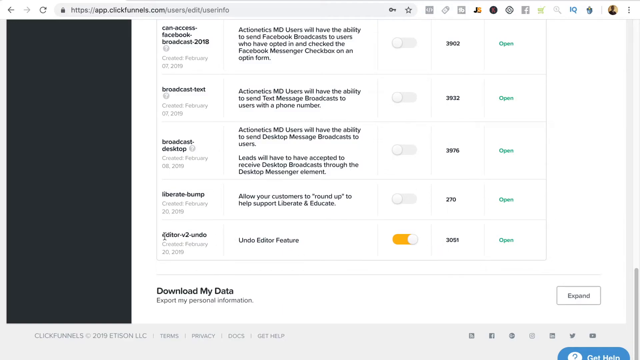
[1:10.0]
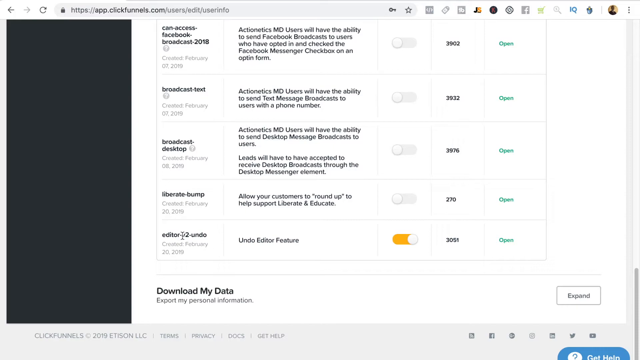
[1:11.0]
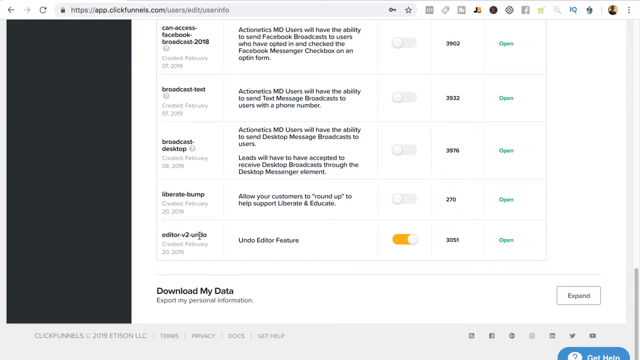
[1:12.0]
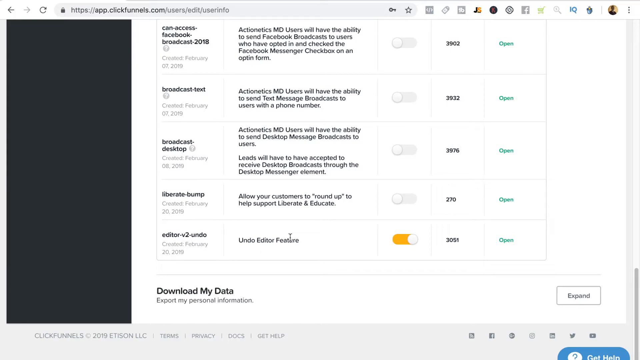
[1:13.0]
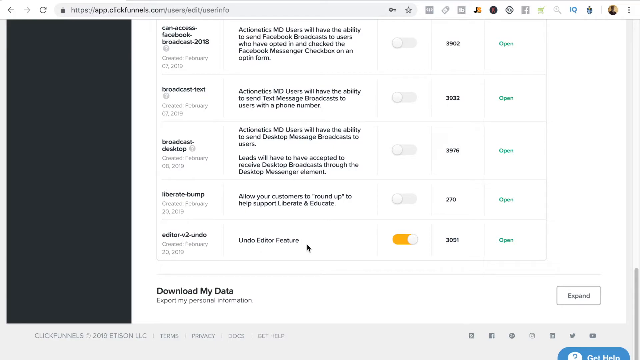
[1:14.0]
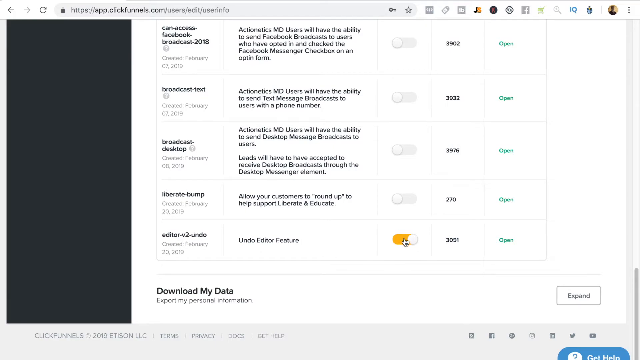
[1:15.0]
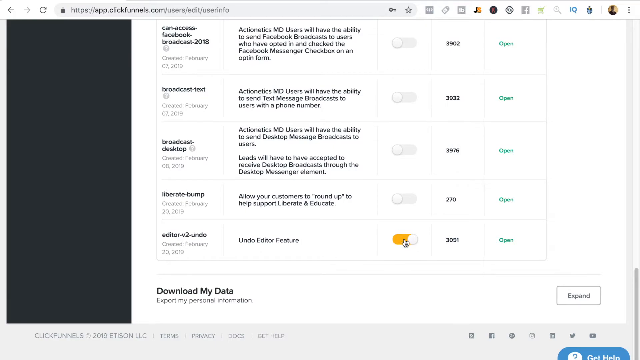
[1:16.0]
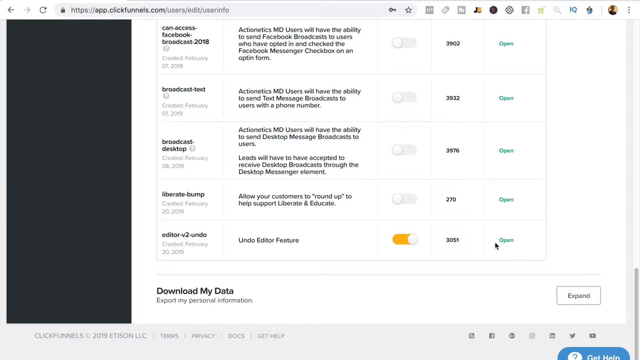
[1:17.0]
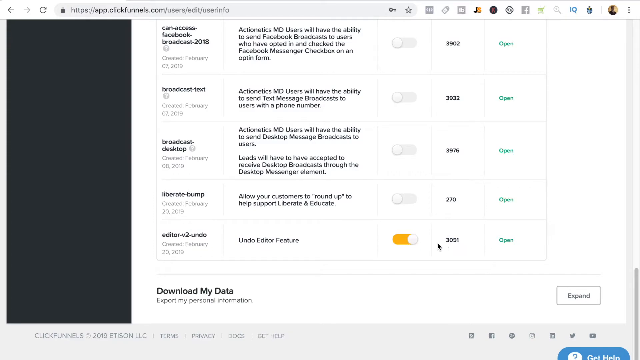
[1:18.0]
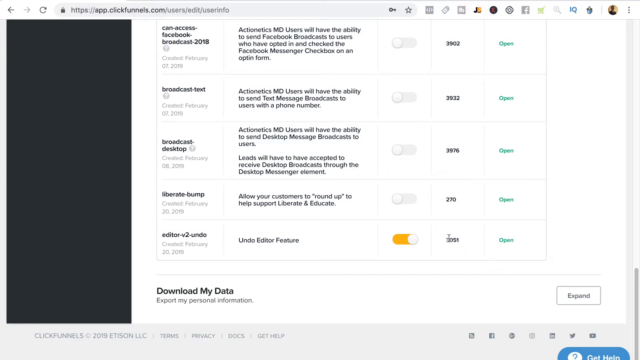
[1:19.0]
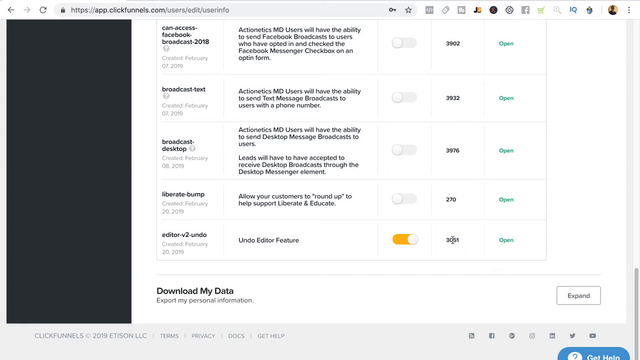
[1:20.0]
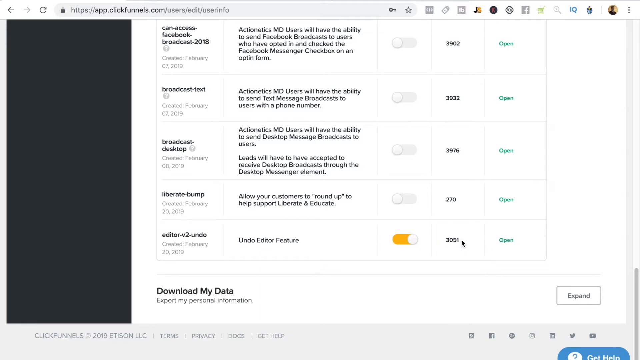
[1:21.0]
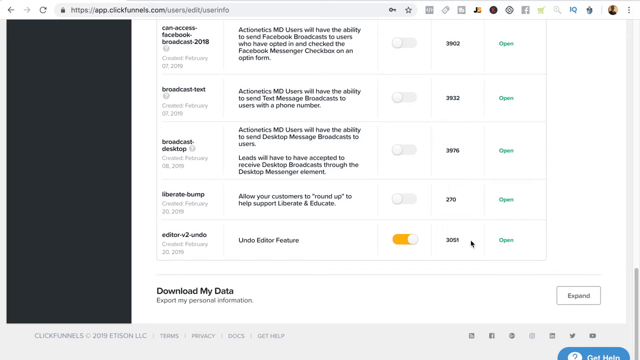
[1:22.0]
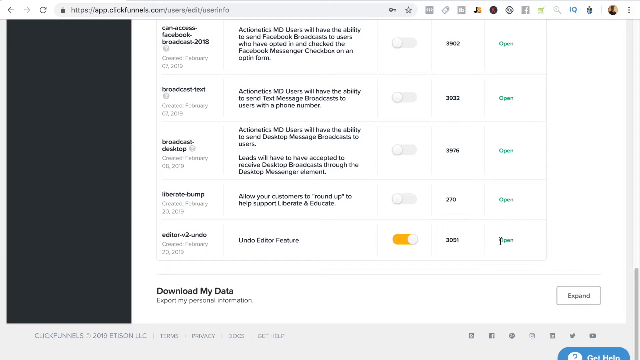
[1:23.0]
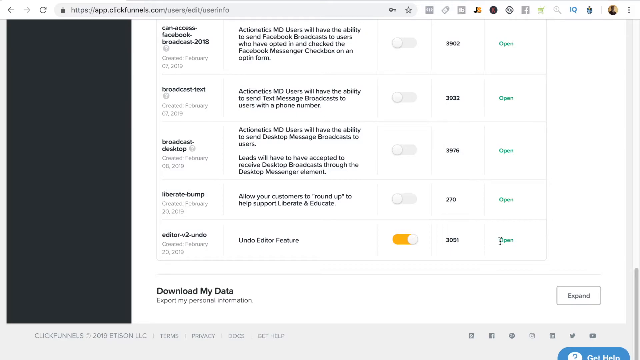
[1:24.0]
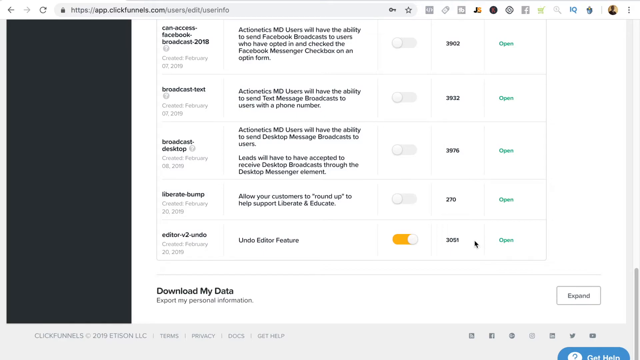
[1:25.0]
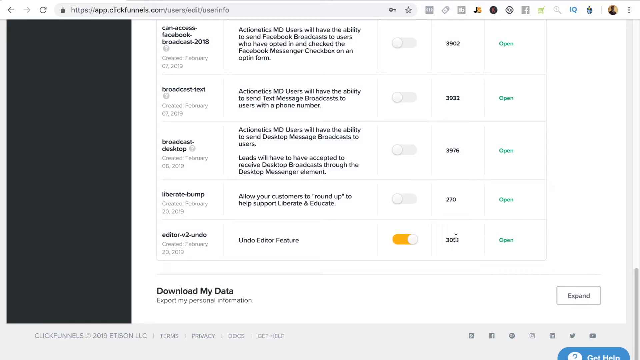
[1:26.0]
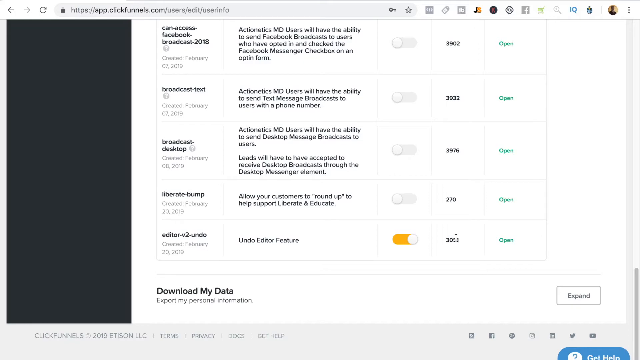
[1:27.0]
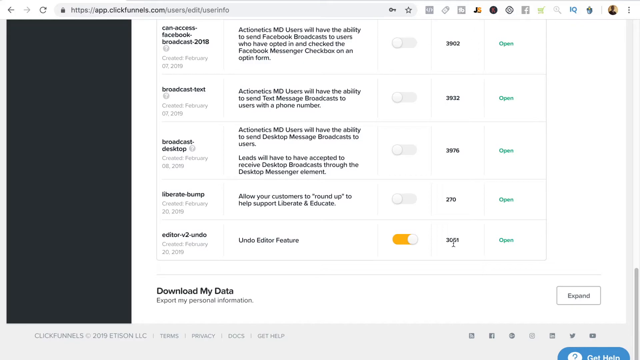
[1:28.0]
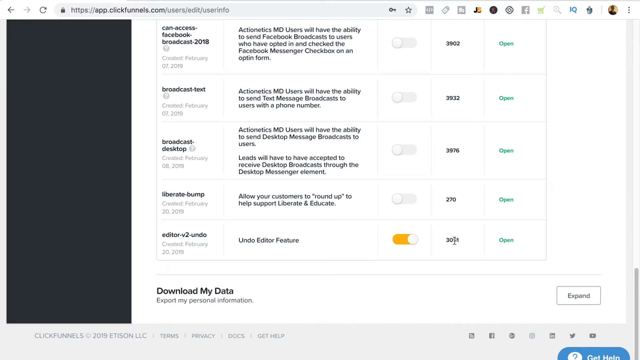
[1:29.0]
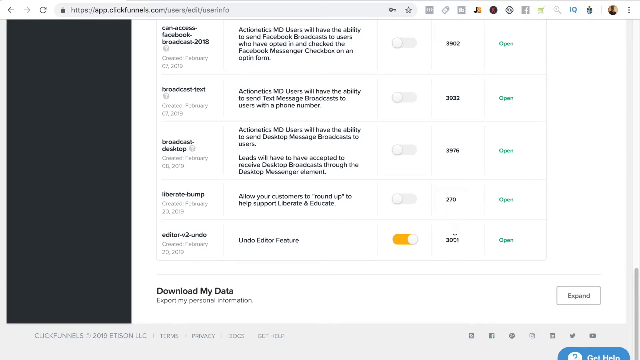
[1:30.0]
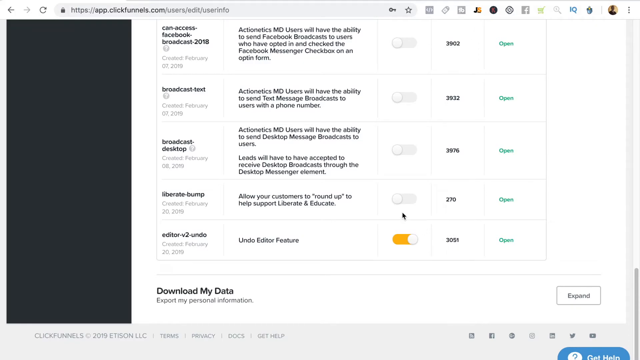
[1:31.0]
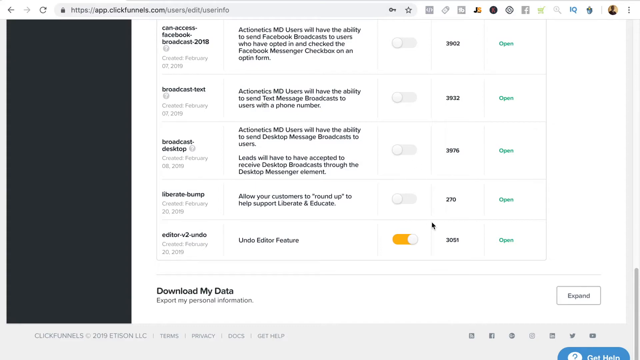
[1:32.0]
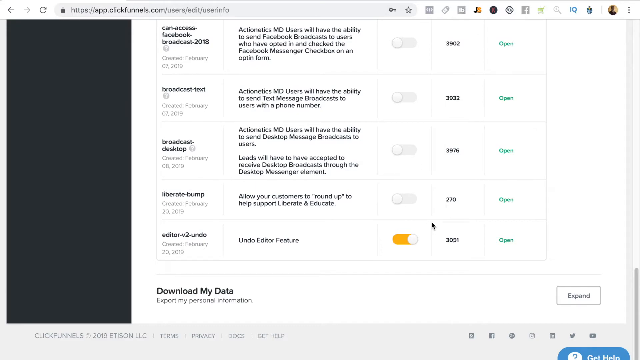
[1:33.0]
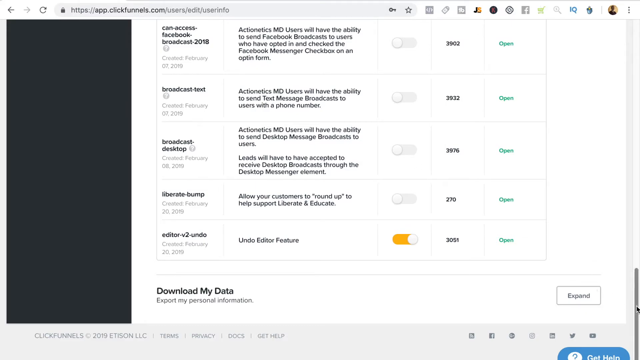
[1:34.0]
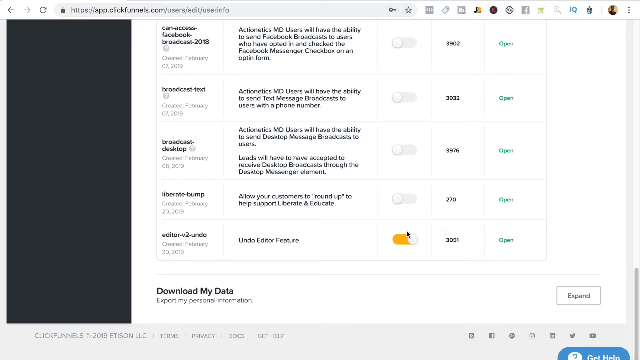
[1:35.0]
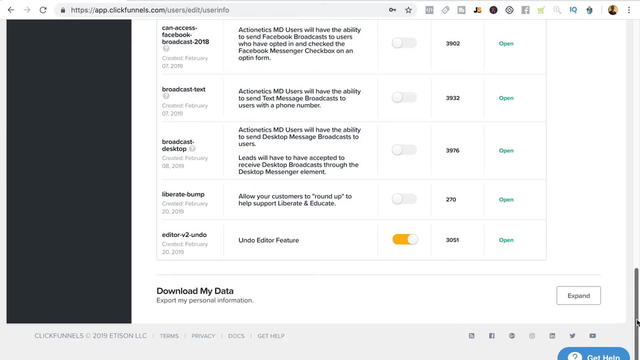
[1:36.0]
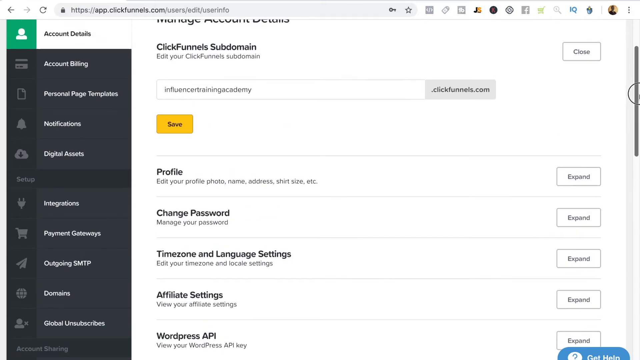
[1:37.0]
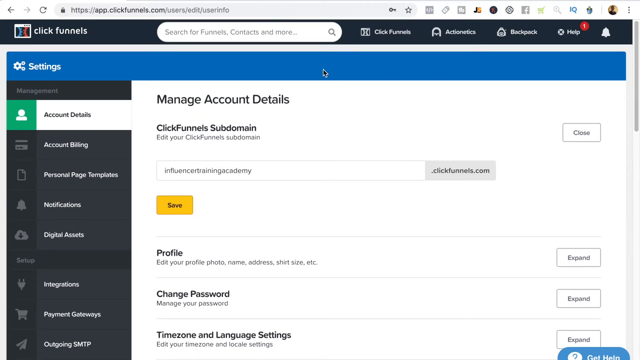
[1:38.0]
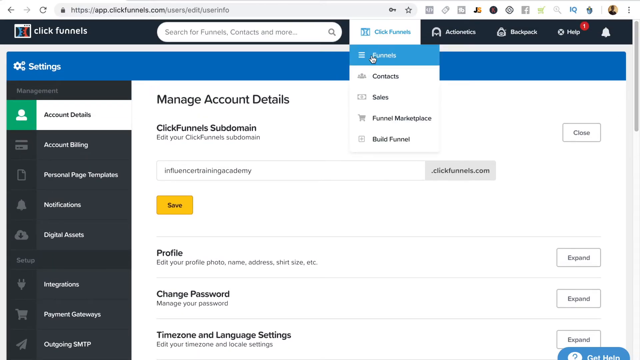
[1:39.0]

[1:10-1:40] A bit further down in the expanded tab is a small table with five columns. Down the left-hand side are "Can Access Facebook Broadcast 2018," "Broadcast Text," "Broadcast Desktop," "Liberate Bump," and "Editor V2 Undo." Next to Can Access Facebook Broadcast 2018 it reads "Actionetics MD users will have the ability to send Facebook broadcast to users who have opted in and checked the Facebook Messenger checkbox on an option form," followed by a toggle that is off, the number 3902, and a green word "open." Next to Broadcast Text it says "Actionless MD users will have the ability to send text message broadcast to users with a phone number"; the toggle is off, the number is 3932, and the green text is "open." Next to Broadcast Desktop it says "Actionetics MD users will have the ability to send desktop message broadcast to users. Leads will have to be accepted to receive desktop broadcast through the desktop messenger element"; the toggle is off, the number is 3976, and it is "open." Next to Liberate Bump it says "allow your commenters to round up to help support, liberate, and educate"; the toggle is off, the number is 270, and the green word is "open." Next to Editor V2 Undo it says "Undo Editor Feature"; the toggle is on and yellow, the number is 3051, and it is "open." The cursor hovers over the on toggle, the number 3051, and the green "open," hovers back over 3051, moves around a bit, then scrolls back up to the top of the page, clicks the Click Funnels menu item, and clicks on Funnels.